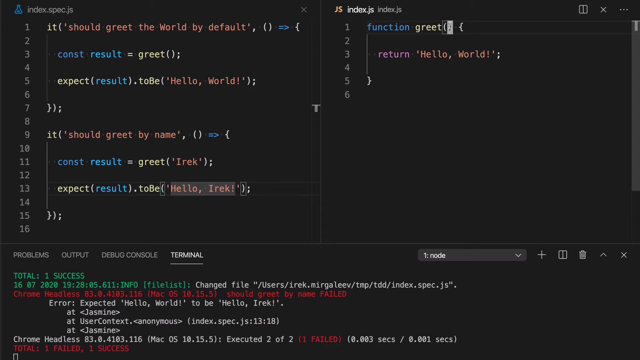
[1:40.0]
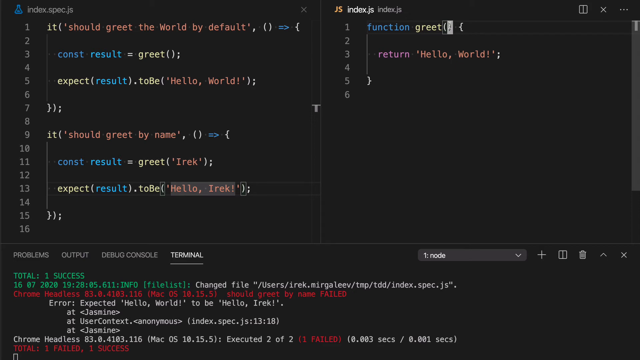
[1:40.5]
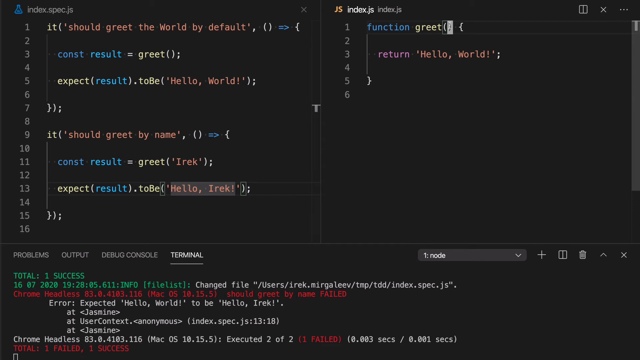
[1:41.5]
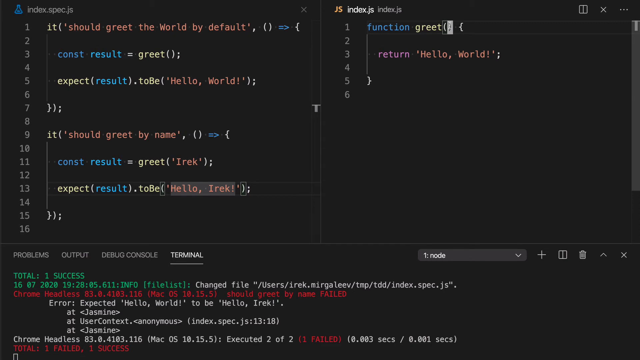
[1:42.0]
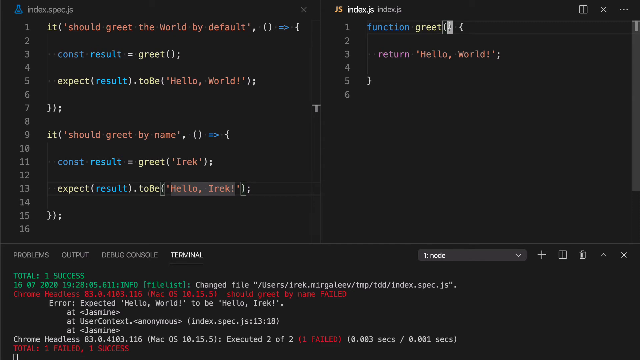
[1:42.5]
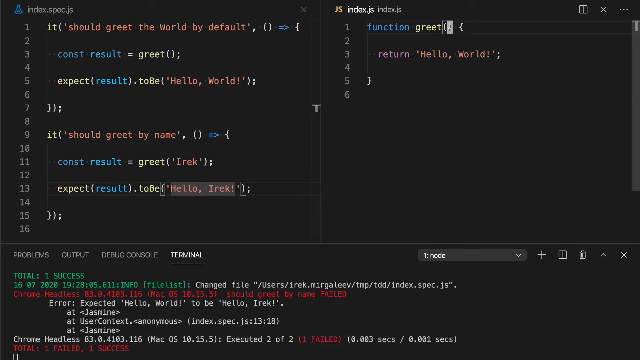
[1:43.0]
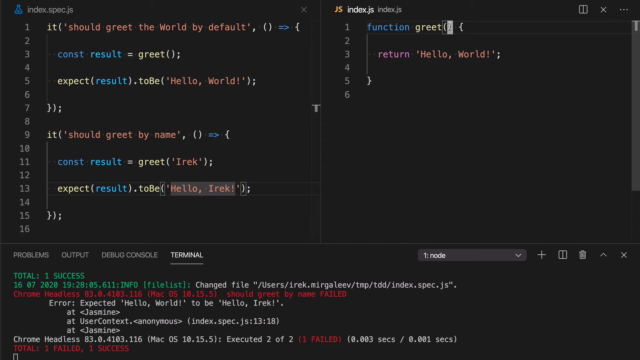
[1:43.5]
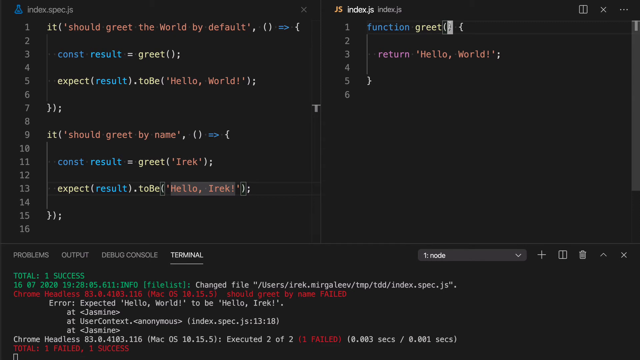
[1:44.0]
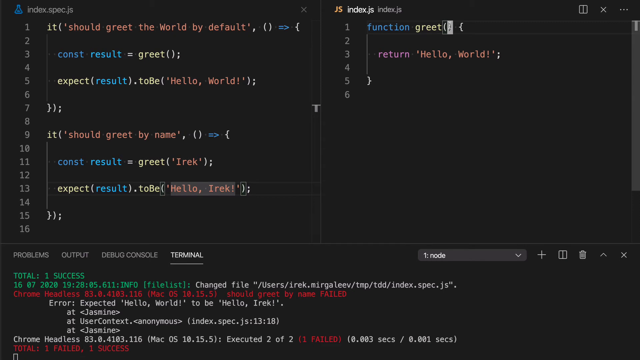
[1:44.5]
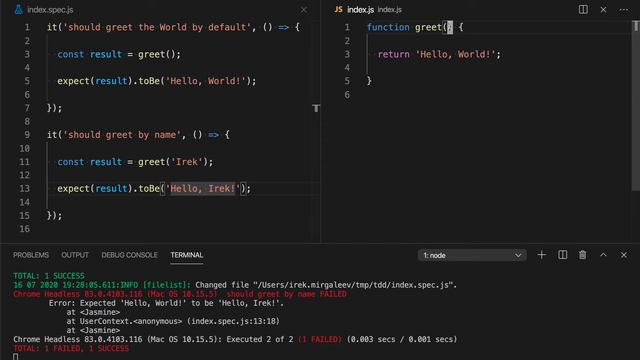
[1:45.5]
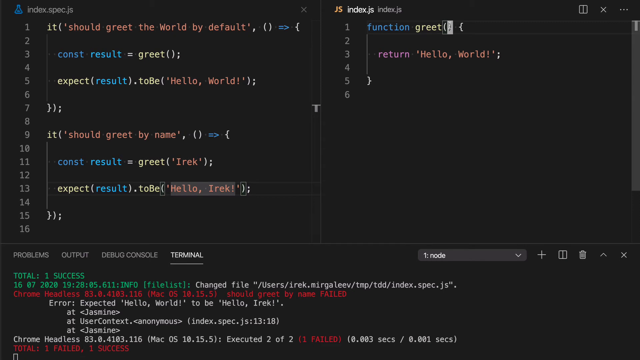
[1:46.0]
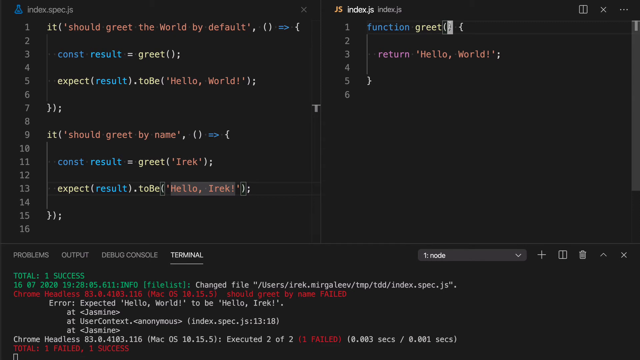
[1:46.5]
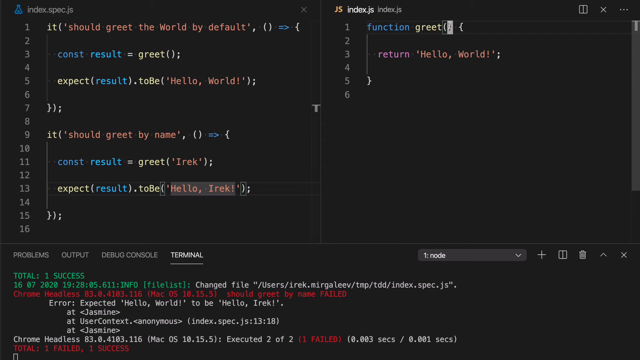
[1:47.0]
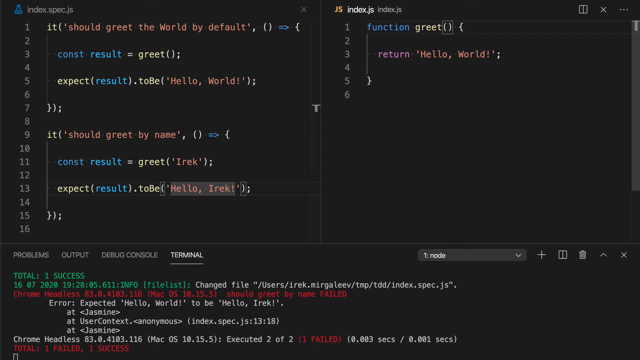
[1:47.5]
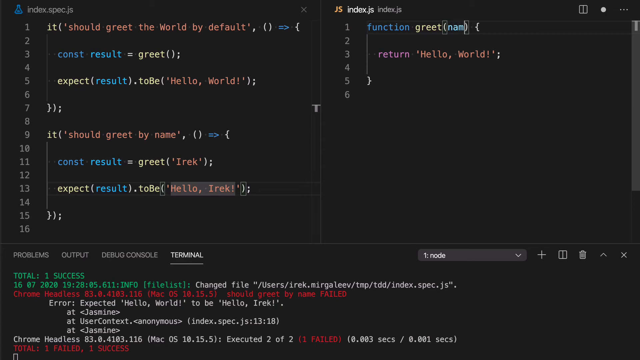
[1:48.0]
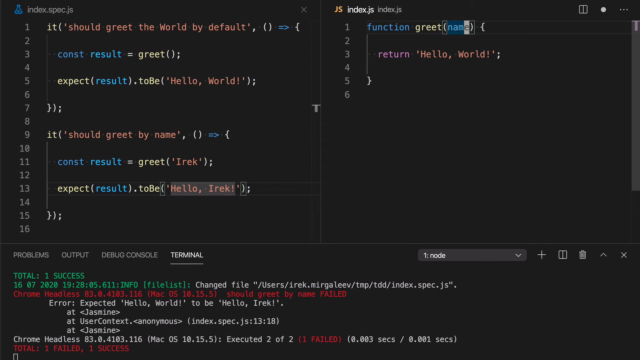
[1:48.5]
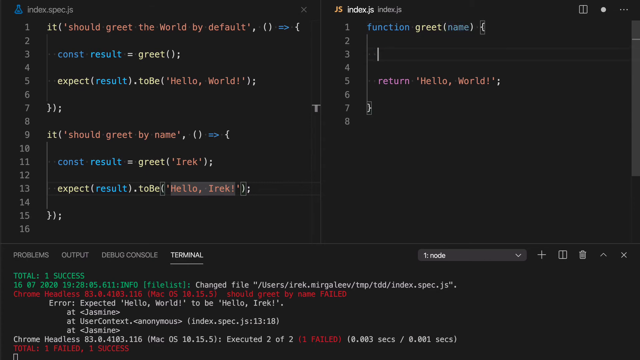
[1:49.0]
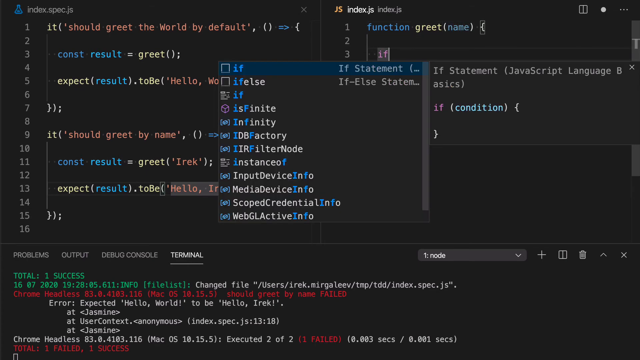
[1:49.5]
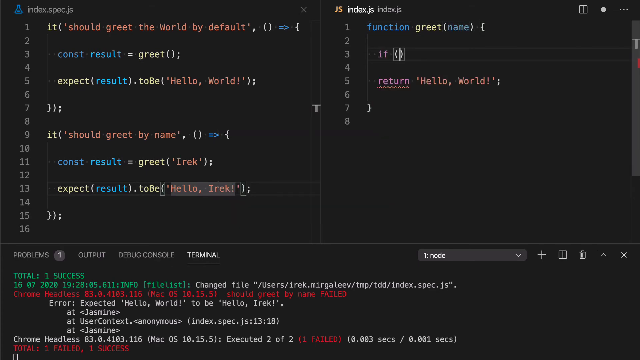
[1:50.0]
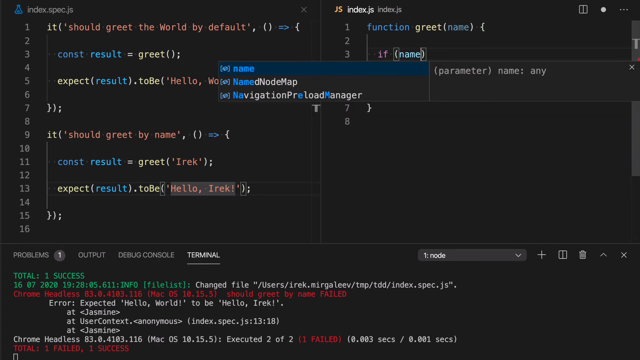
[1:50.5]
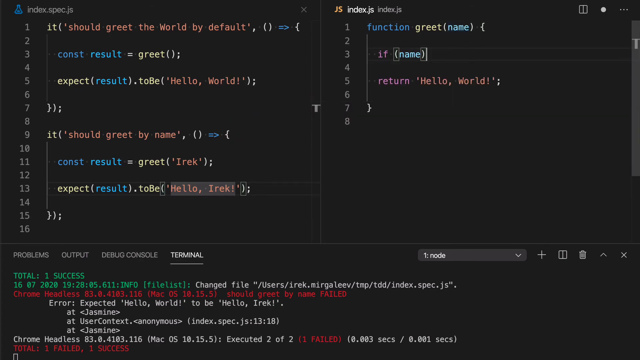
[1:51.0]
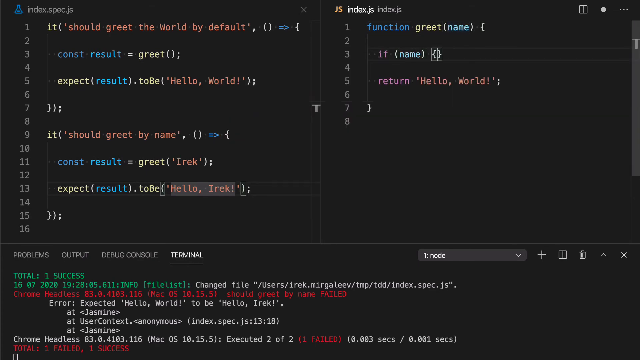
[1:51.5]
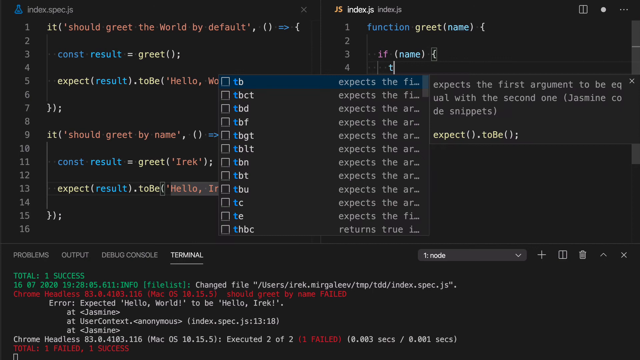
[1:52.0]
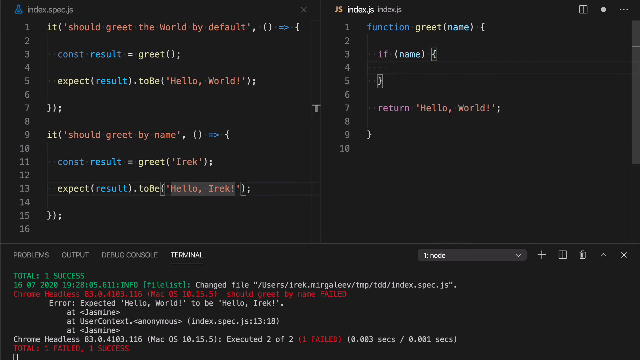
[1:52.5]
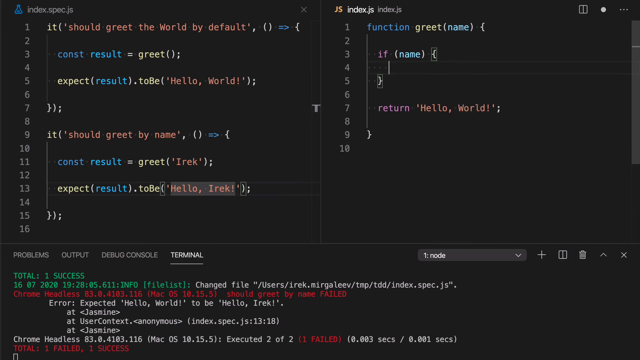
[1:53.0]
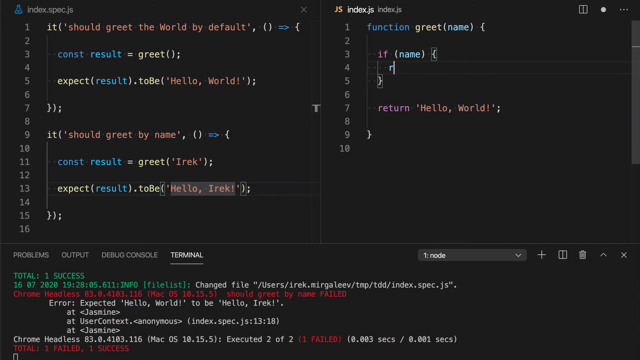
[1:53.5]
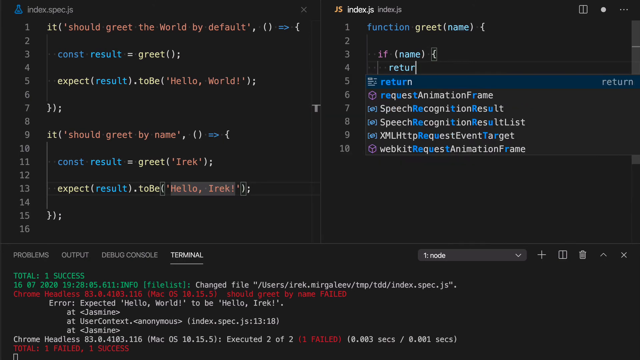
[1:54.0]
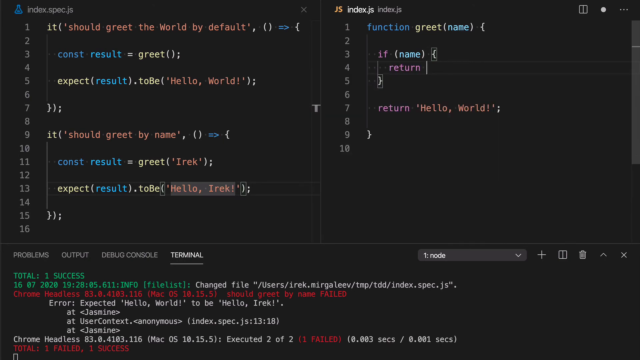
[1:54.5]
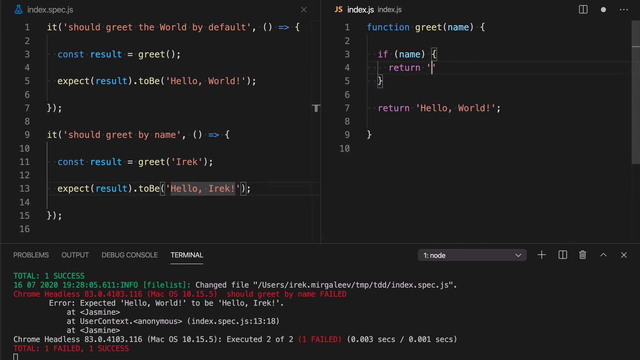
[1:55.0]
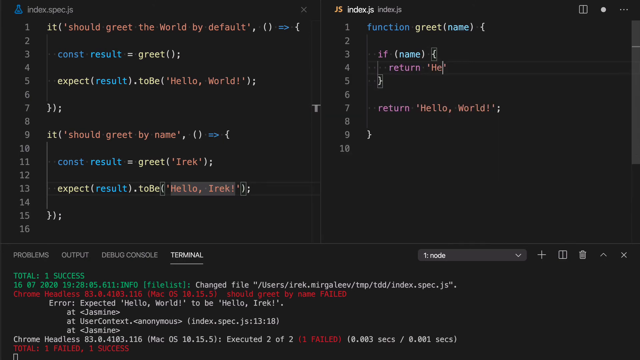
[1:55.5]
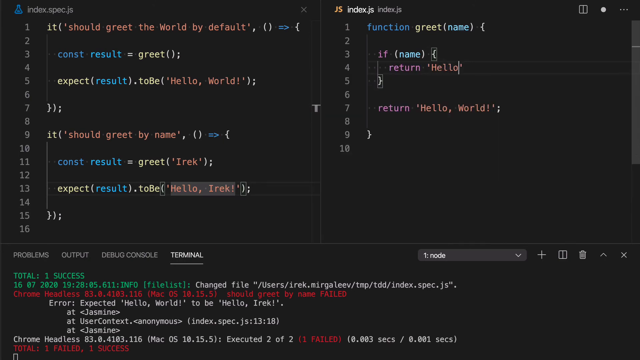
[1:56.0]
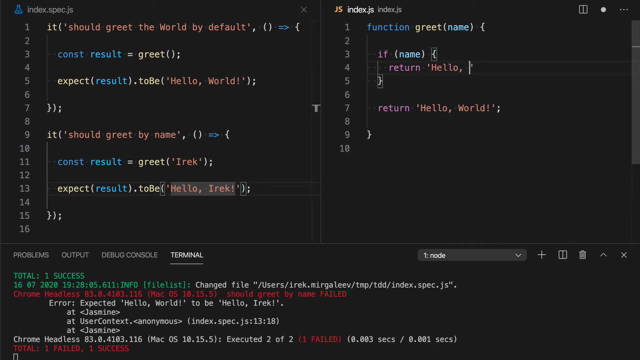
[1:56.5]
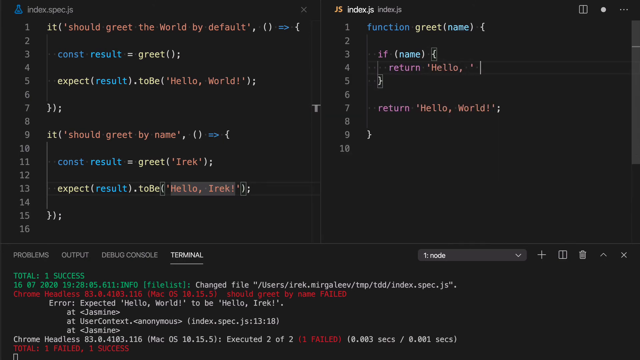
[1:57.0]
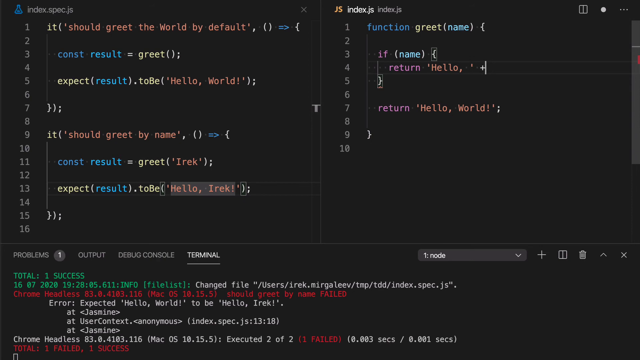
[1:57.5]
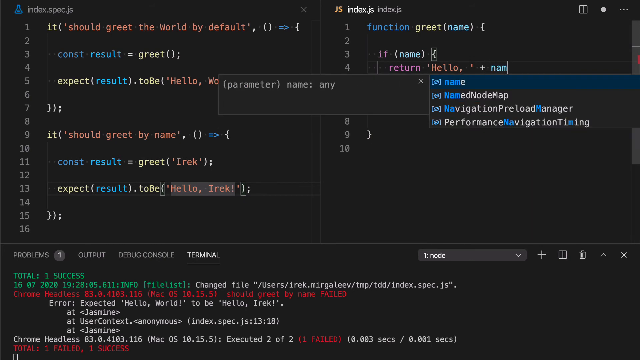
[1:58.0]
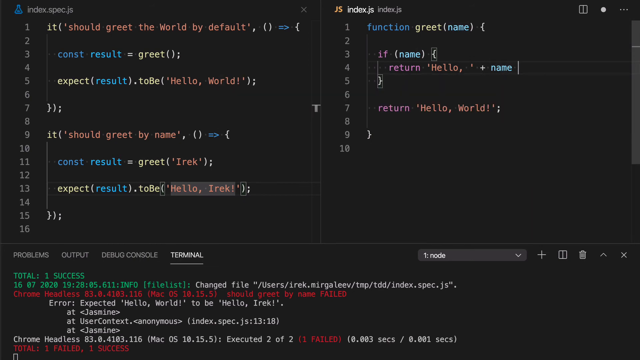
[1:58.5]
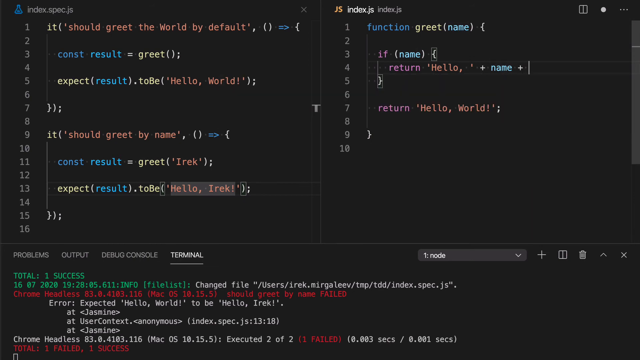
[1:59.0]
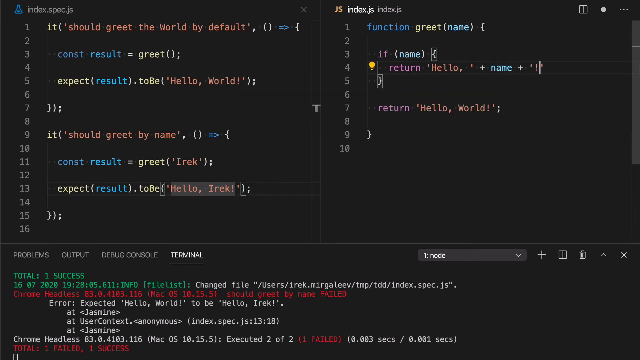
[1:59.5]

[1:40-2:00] The black screen shows code in blue, yellow, red and green, including "should greet the world by default" and "should greet by name". In the upper right corner someone types "if name", a colon, "hello", "return", plus signs and "name"; "greet" is in yellow in the upper right corner, and "JS" is still in yellow. Other words are in green, red, white, blue and yellow.